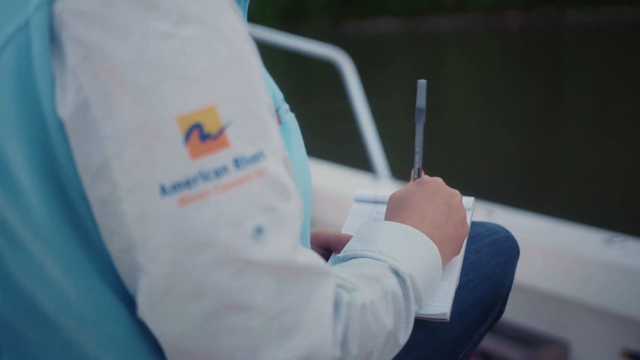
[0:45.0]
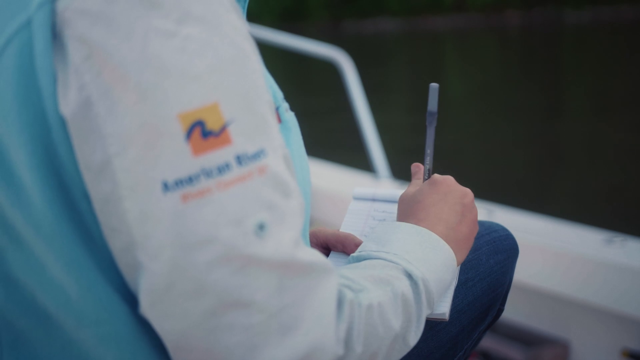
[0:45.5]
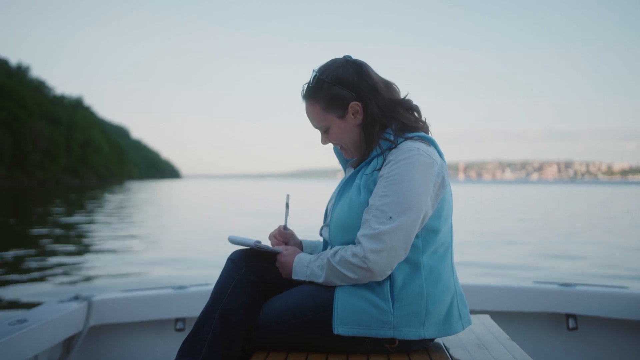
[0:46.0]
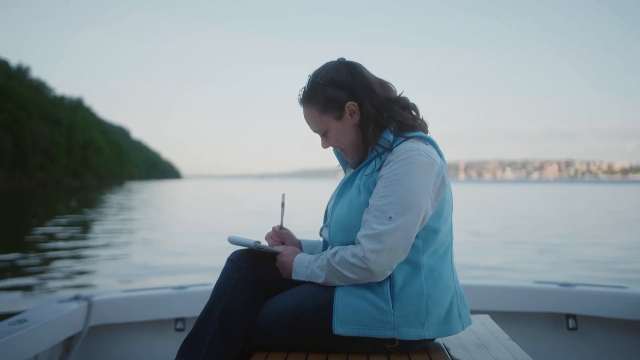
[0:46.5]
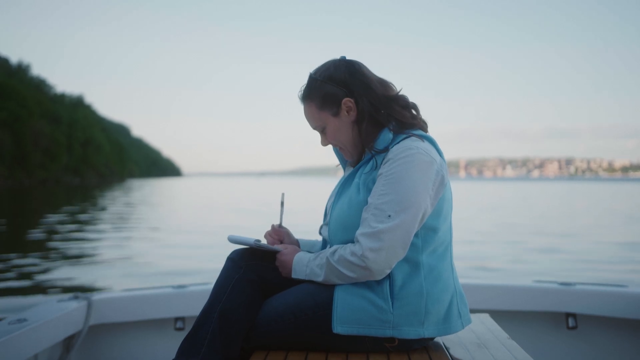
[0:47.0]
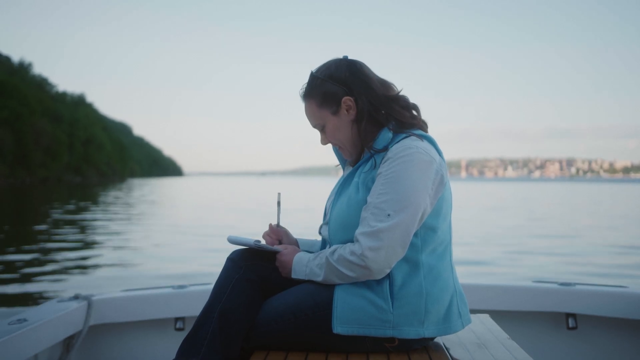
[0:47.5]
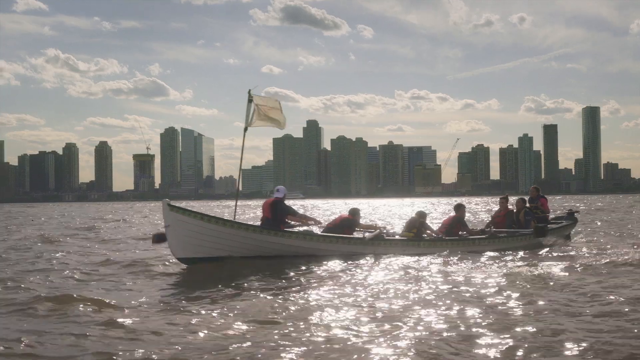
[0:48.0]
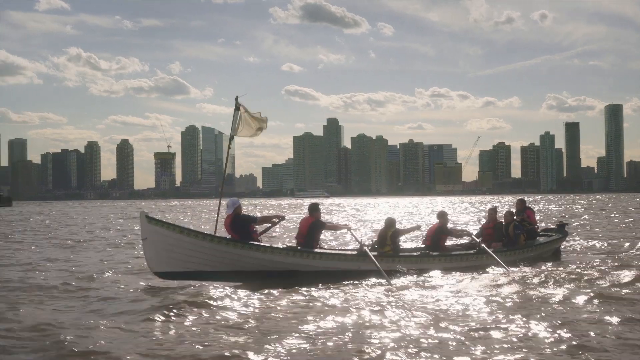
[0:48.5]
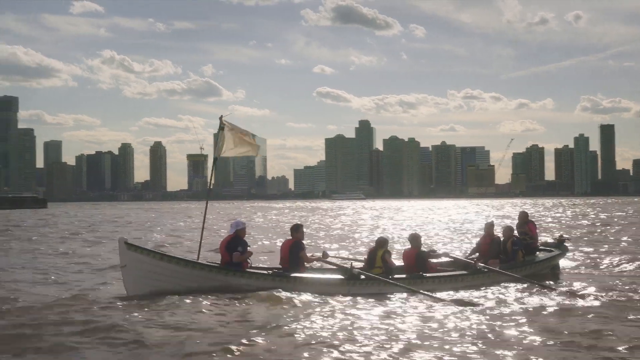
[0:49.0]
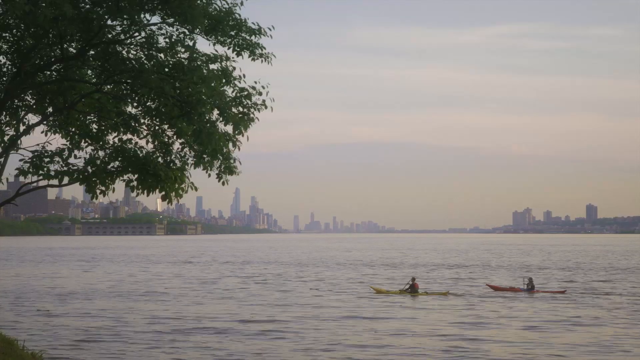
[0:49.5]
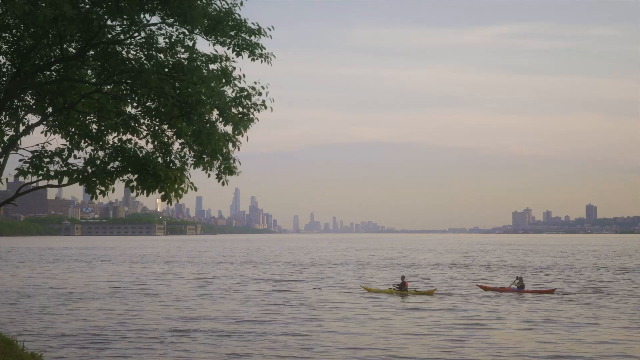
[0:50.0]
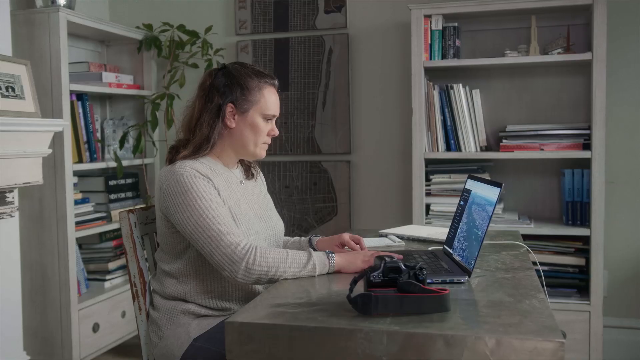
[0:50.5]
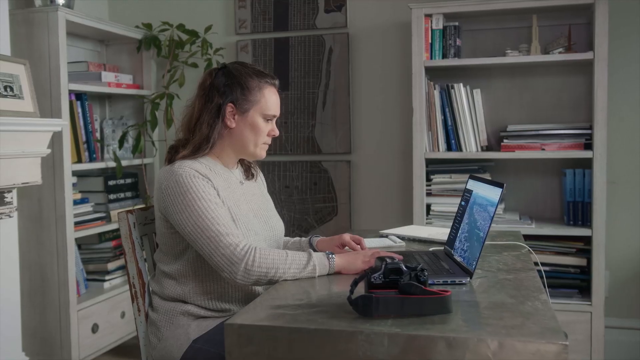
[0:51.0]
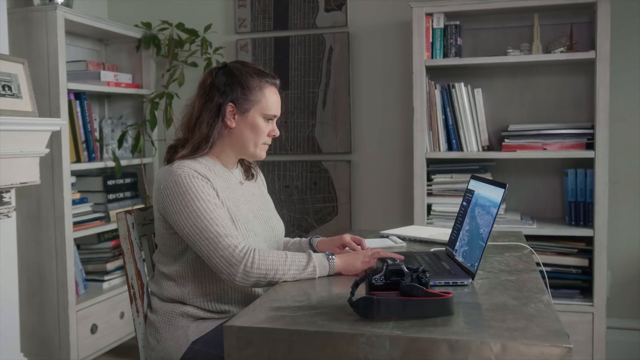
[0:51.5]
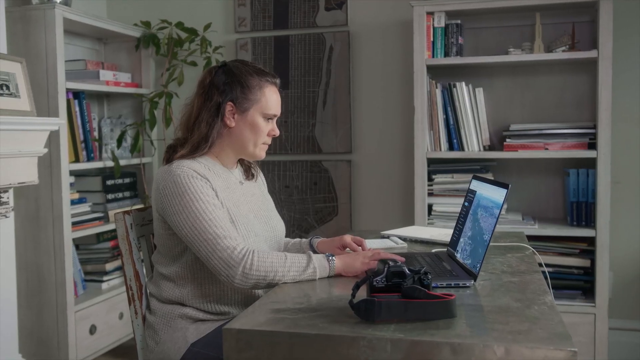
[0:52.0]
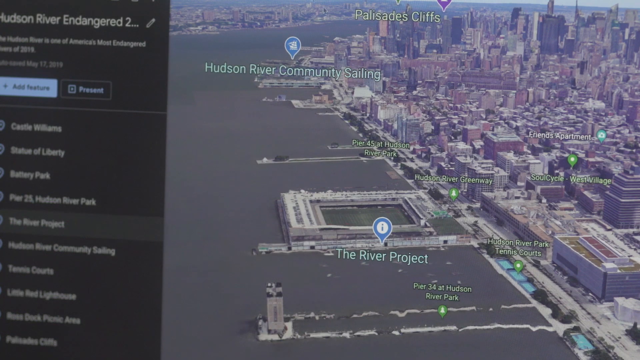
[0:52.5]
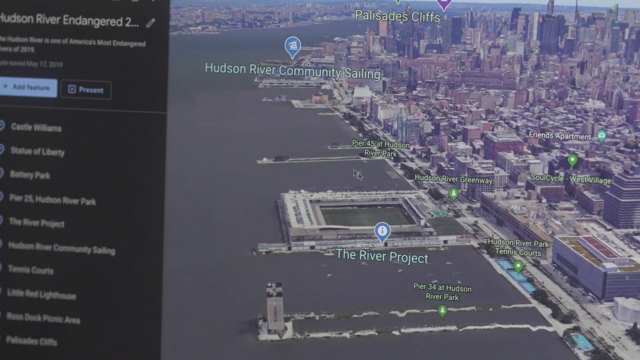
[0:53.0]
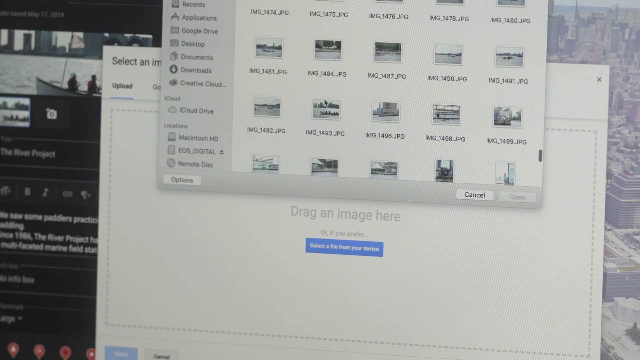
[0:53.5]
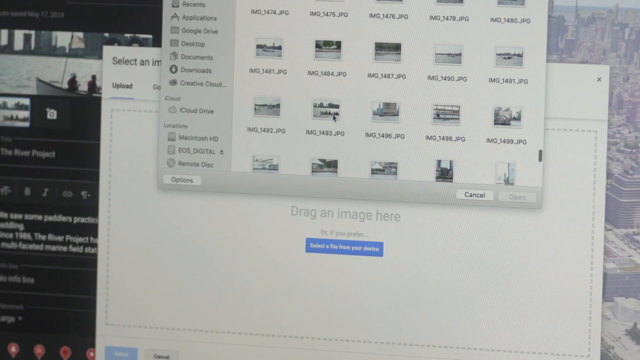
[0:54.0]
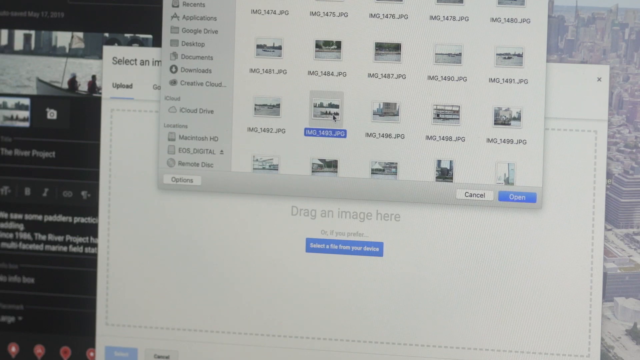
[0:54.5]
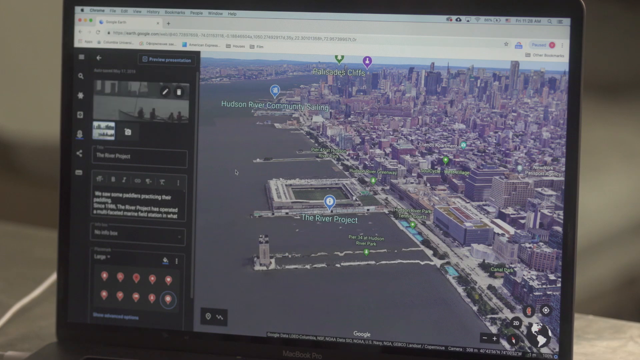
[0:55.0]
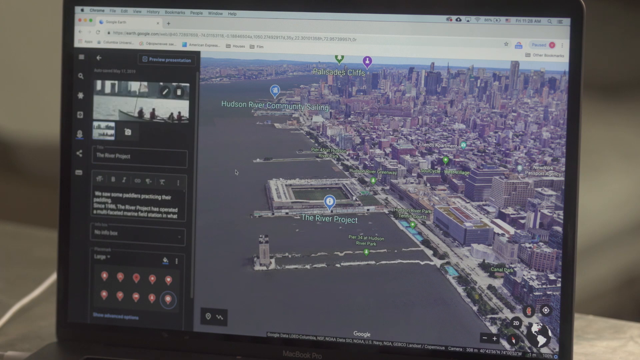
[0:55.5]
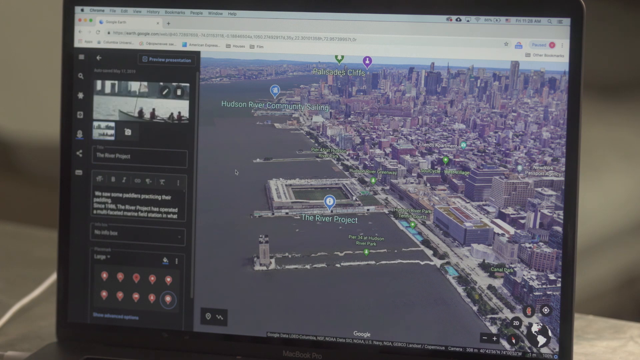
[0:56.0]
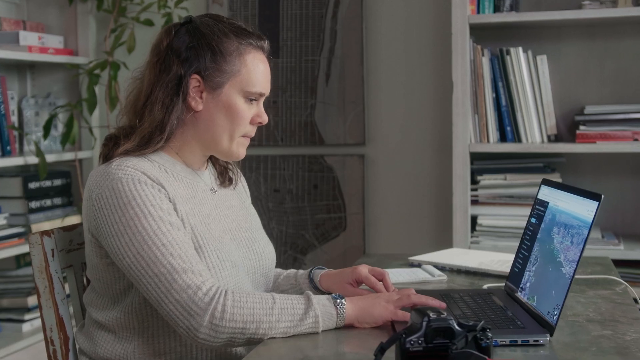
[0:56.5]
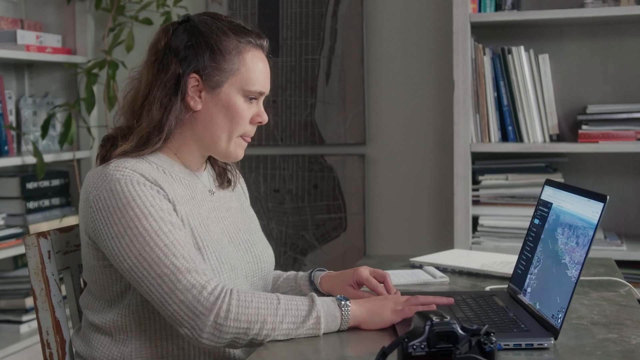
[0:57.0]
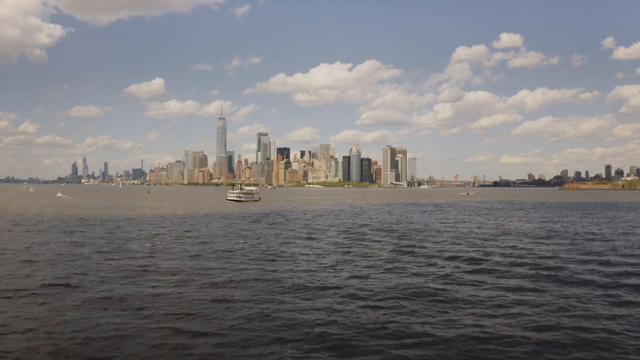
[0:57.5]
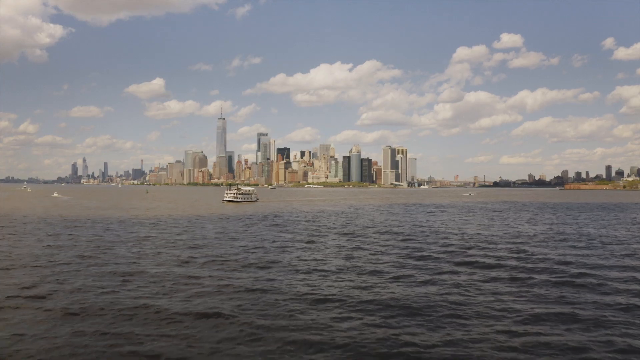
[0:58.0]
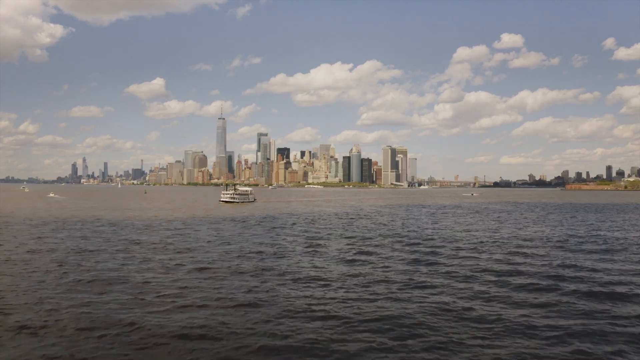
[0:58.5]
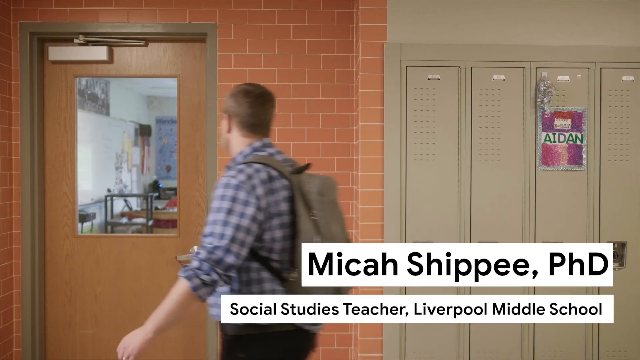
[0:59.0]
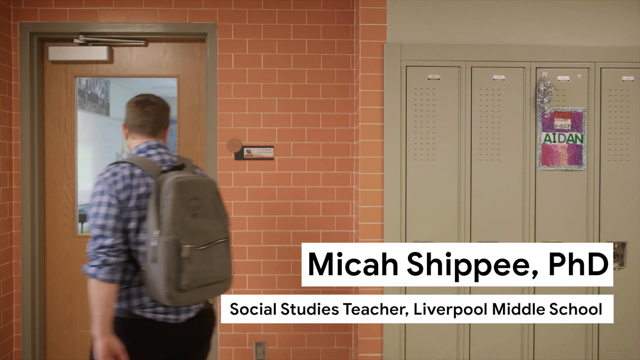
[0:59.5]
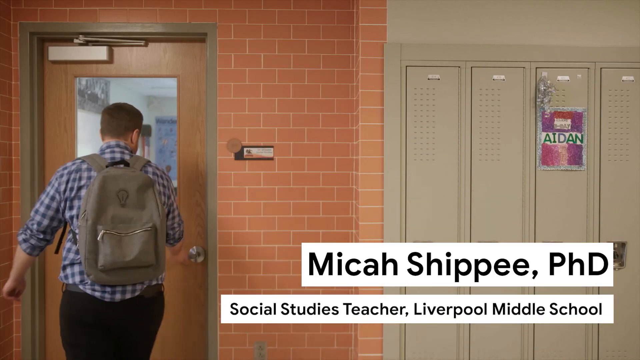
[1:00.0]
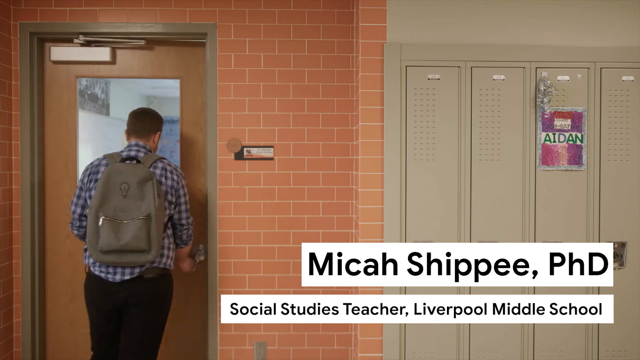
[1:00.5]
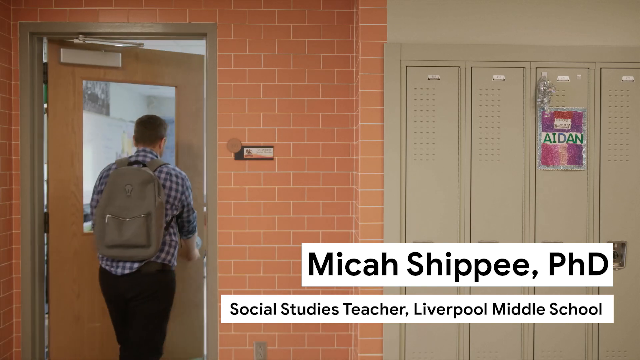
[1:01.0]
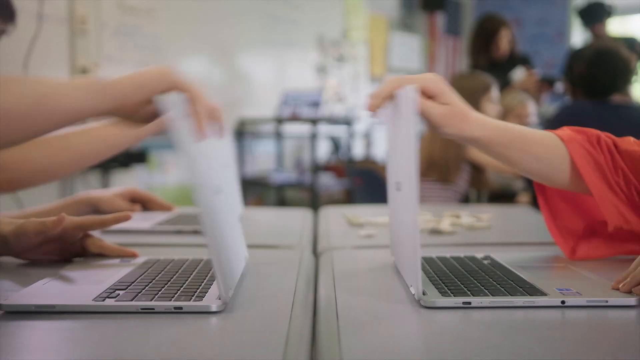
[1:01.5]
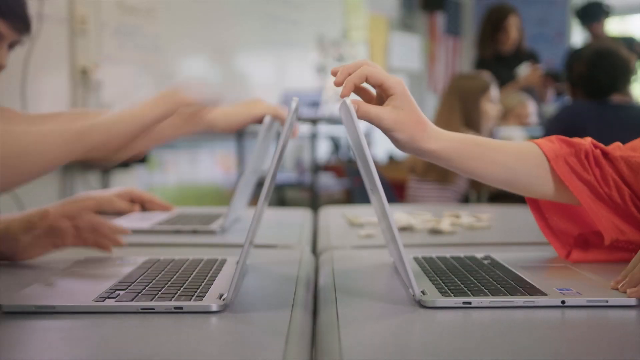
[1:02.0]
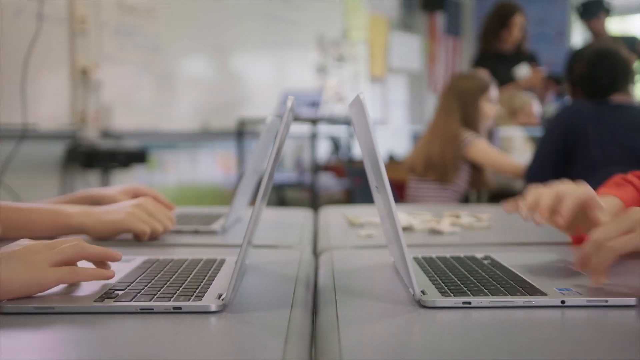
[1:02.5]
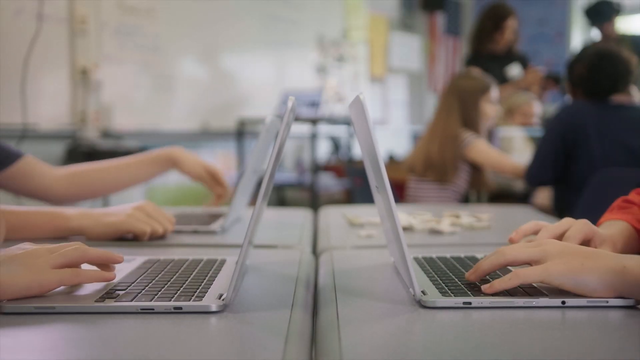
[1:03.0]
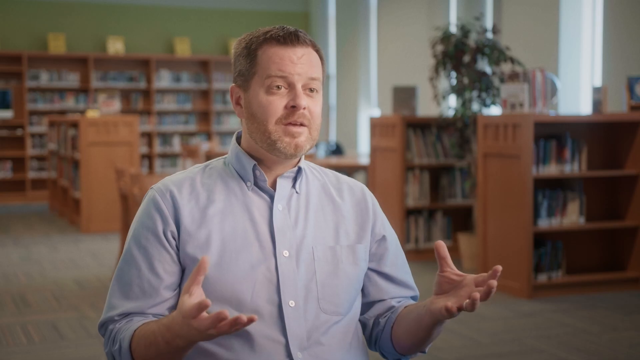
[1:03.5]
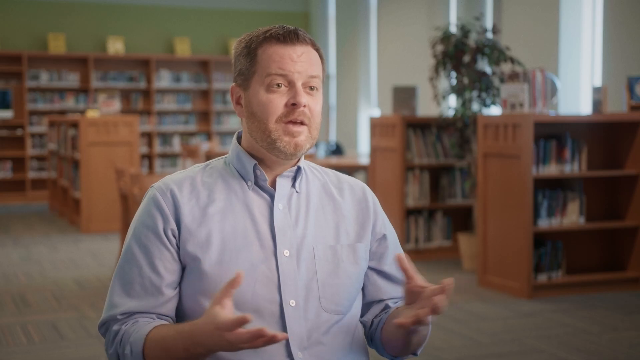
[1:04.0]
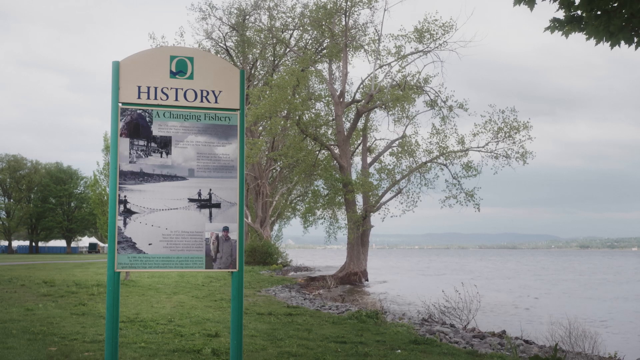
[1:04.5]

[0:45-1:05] Several different scenes flash by. A woman in her 30s in a blue vest, white button-down shirt and black jeans sits on the edge of a boat writing in a notebook; the words "American River" are on her left sleeve. Next, people in a canoe, maybe about six individuals, row backwards along the river. Another scene shows two canoes with people rowing and the New York City skyline in the background. The same woman sits at a gray marble desk, possibly in an office, with many books in the background, looking at her laptop and moving photos around; she seems to be looking at a map with River Project as the focal point, where there is a geolocation tag. A post sign saying "history" flashes by. A man then walks past school lockers into what appears to be a classroom, with the name "Micah Shippee PhD, social studies teacher, Liverpool Middle School" on screen. Students all open their laptops at the same time.